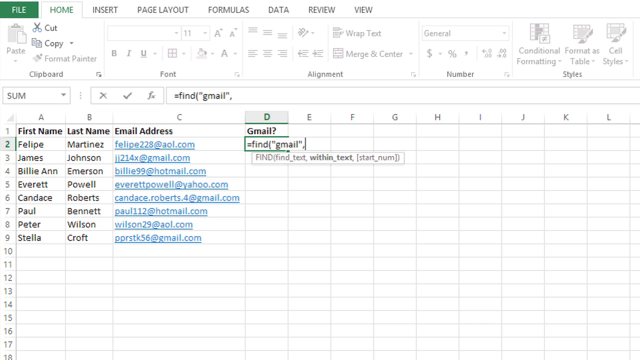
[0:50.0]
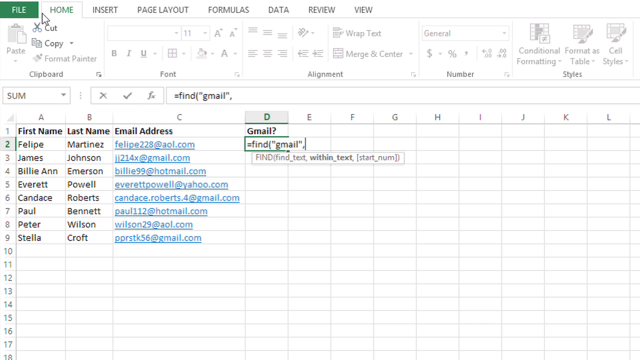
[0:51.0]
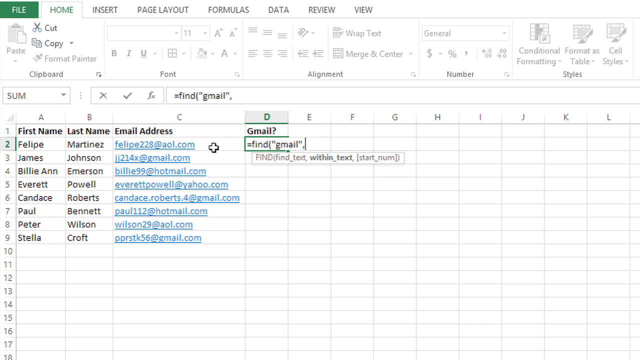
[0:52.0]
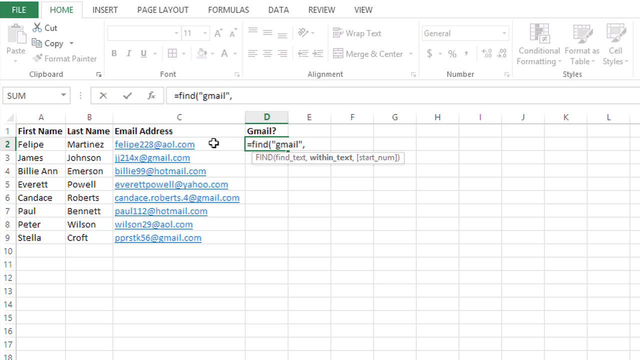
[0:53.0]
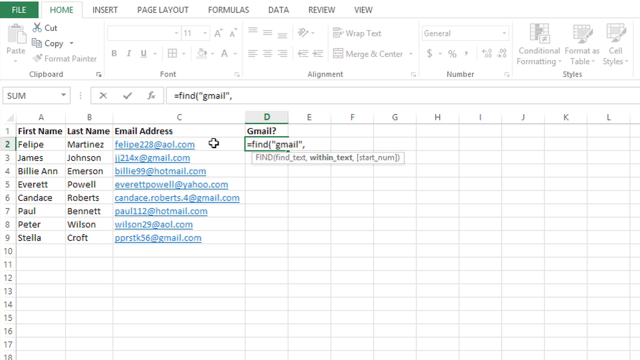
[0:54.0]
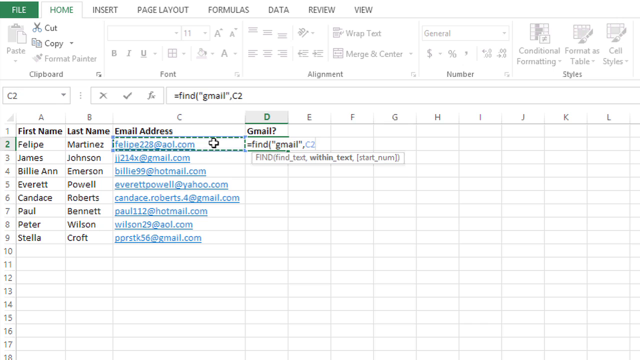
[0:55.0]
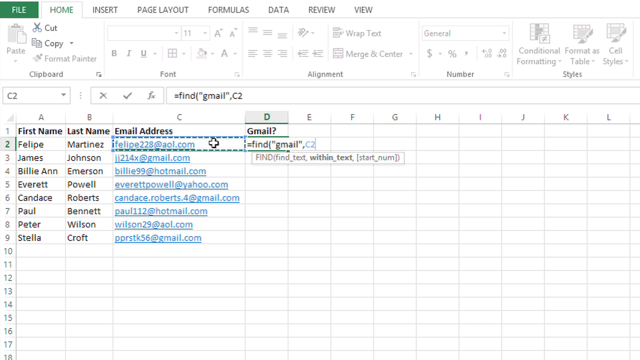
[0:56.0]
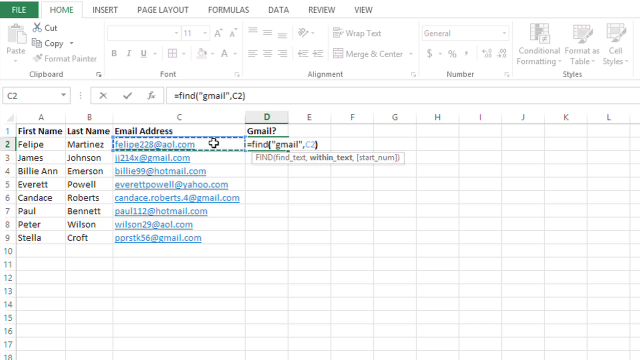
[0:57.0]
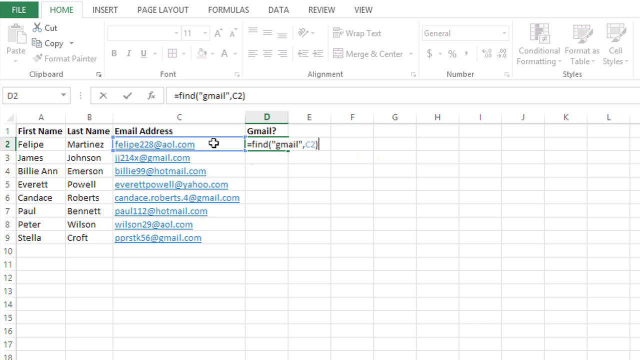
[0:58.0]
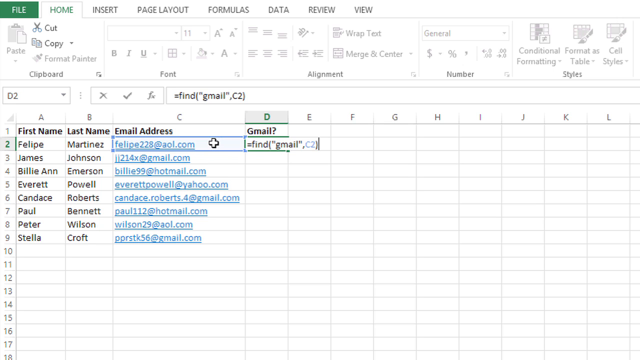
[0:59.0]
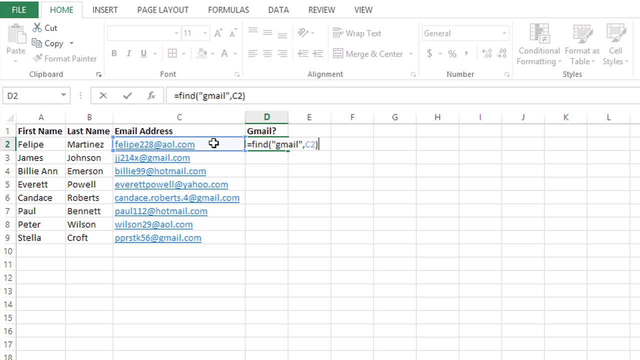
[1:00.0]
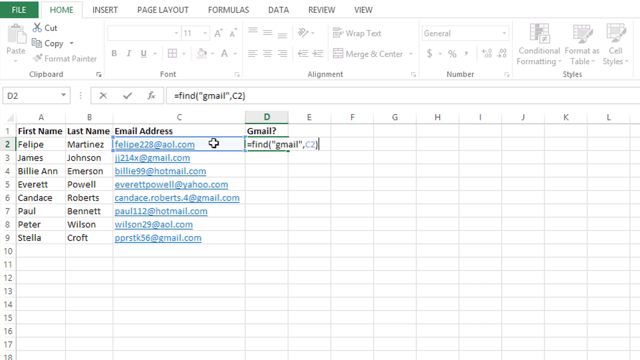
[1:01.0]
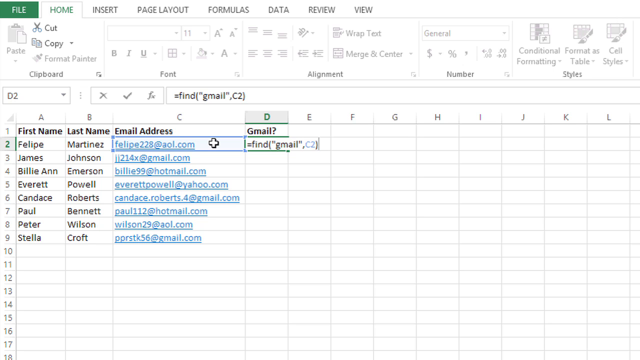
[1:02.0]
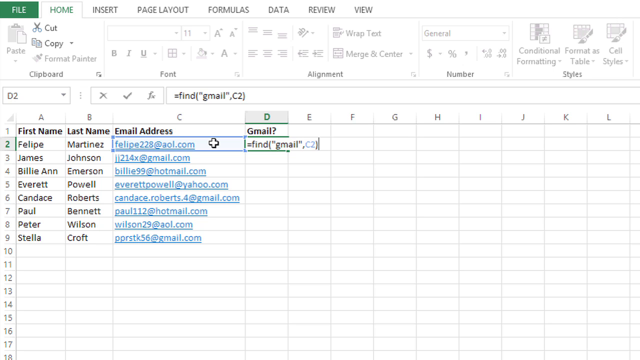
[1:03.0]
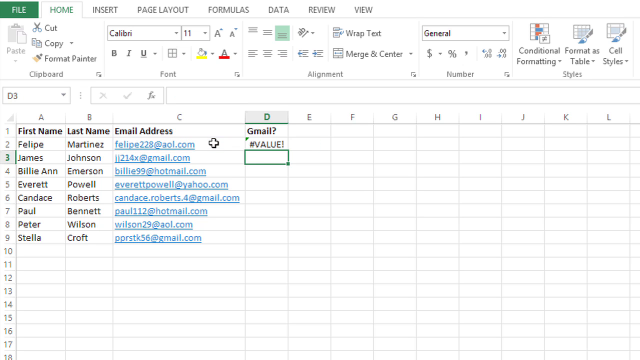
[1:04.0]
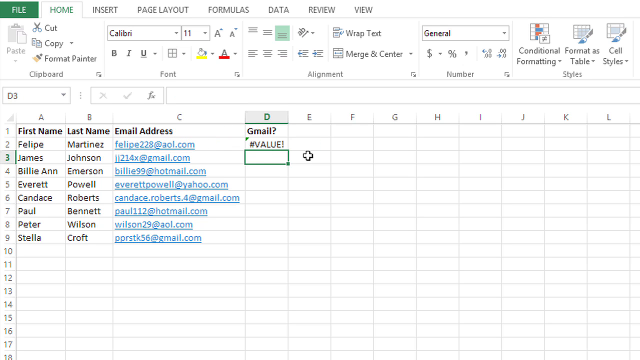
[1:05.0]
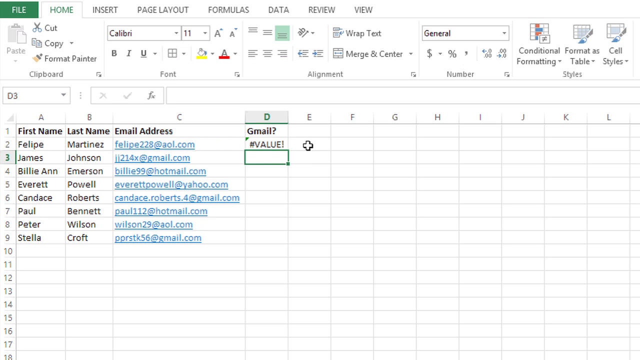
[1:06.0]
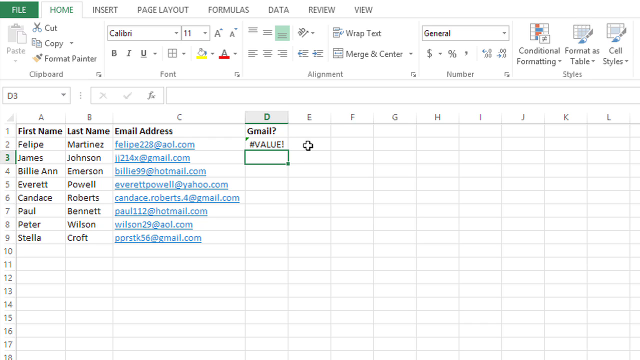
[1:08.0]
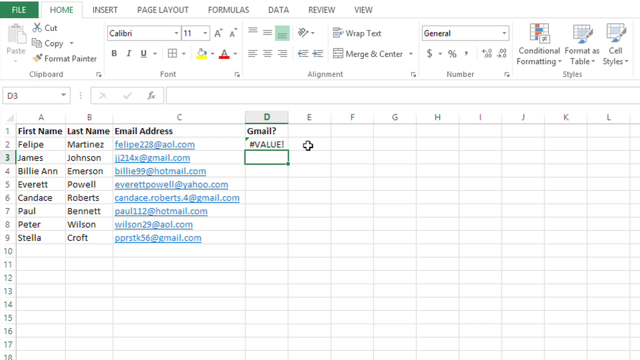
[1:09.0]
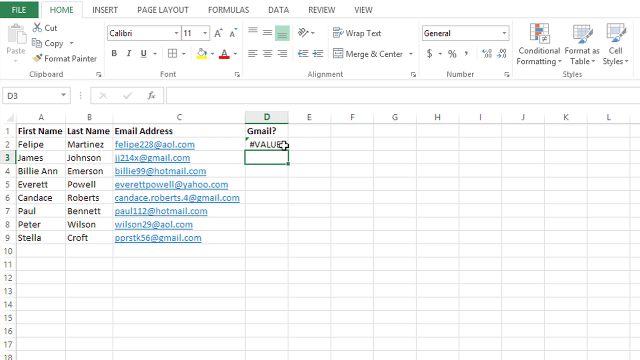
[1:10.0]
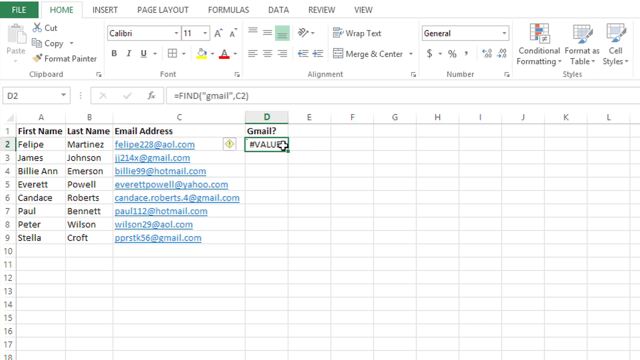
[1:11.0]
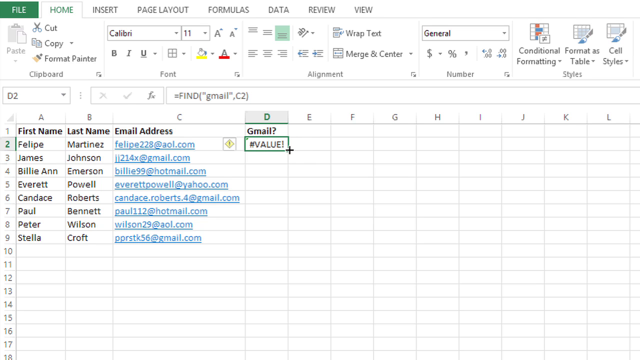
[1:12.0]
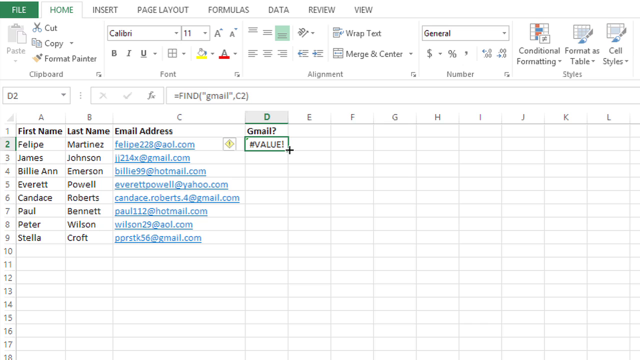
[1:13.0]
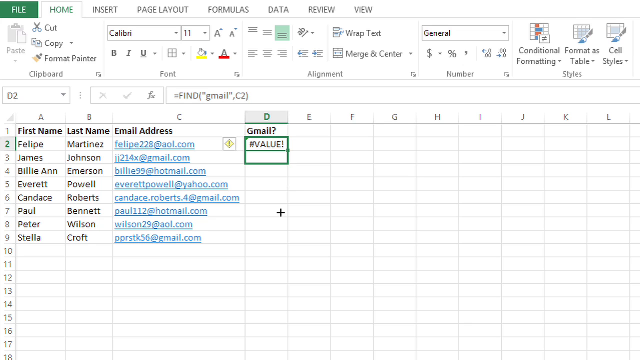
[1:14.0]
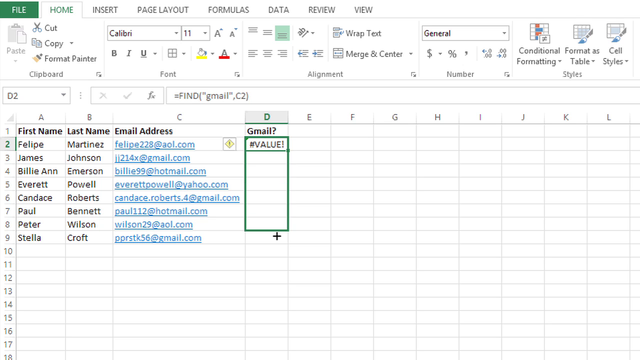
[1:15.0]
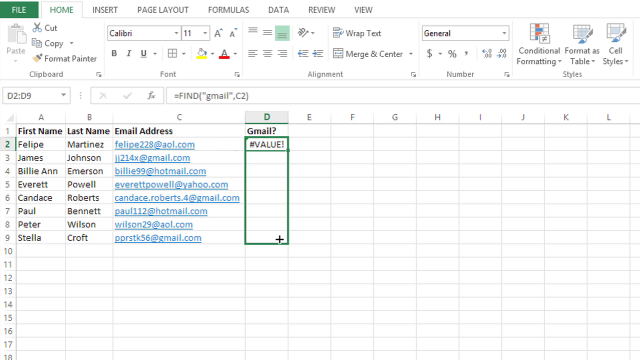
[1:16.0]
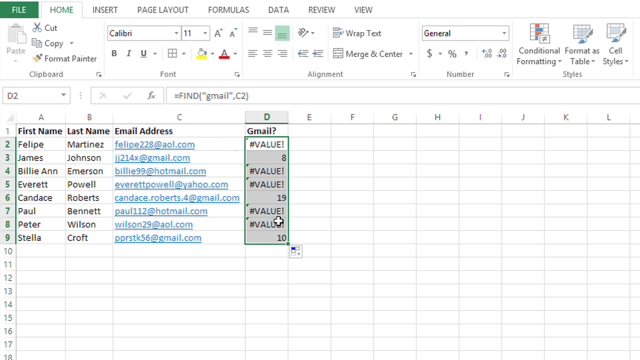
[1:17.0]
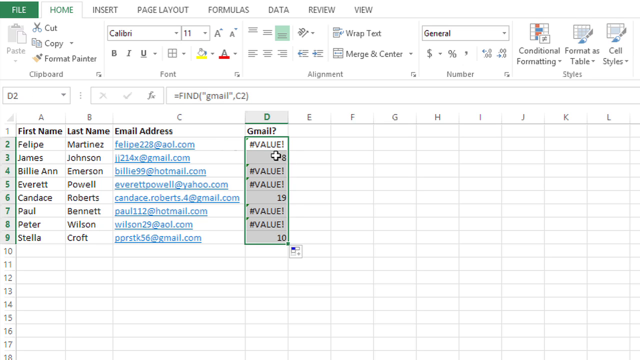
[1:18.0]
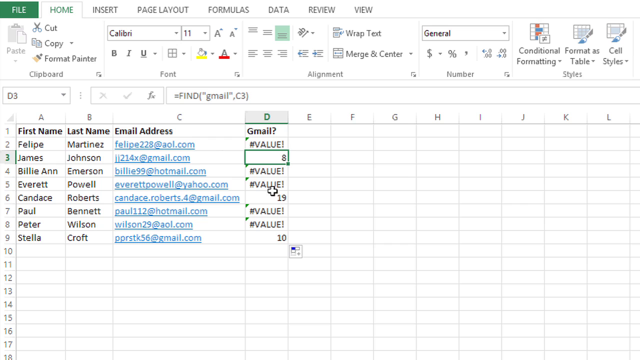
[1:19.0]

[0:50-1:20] The person editing the Excel document is filling in information under column D, which is for Gmail addresses. The rows are numbered two through nine. They type in a find command for Felipe Martinez's Gmail address; his AOL email address is already listed. It looks like the Gmail address was not found, and the value under column D in row two has not been filled in. They appear to try searching for the other people's Gmail addresses as well, and it does not look like they are finding them. All the information in rows two through nine is filled out except for column D, where no Gmail addresses have been filled in.